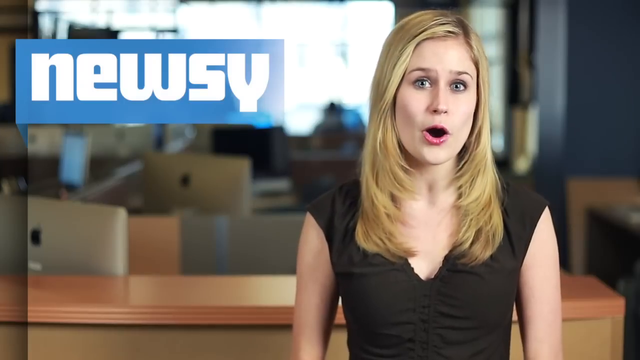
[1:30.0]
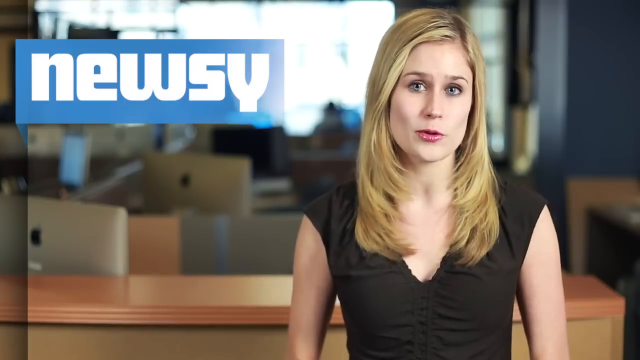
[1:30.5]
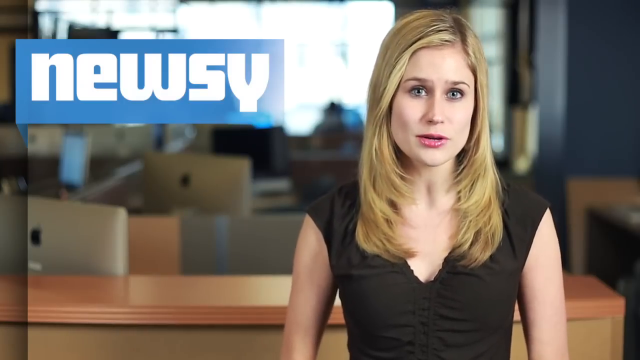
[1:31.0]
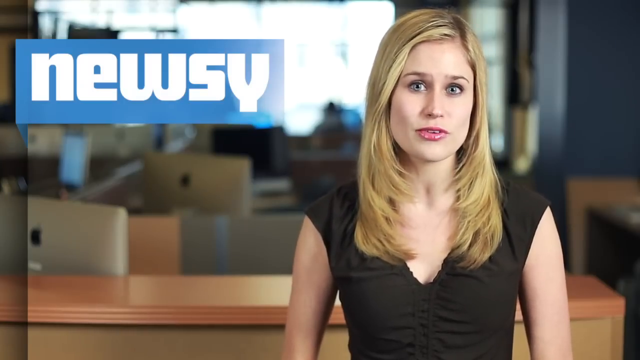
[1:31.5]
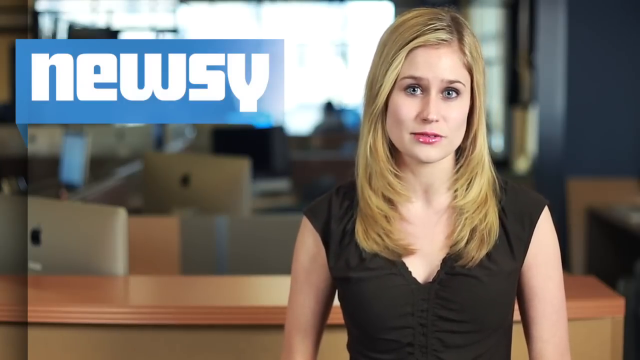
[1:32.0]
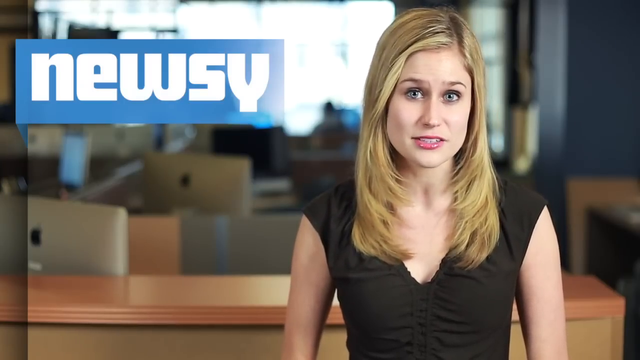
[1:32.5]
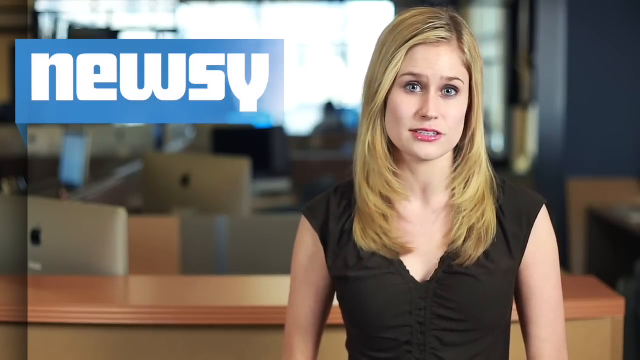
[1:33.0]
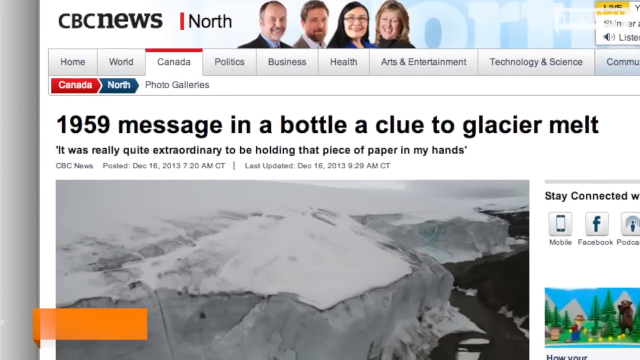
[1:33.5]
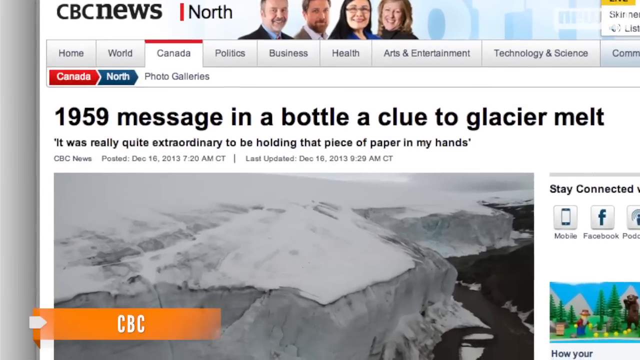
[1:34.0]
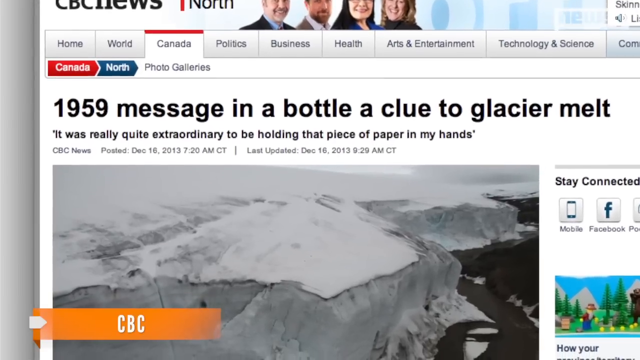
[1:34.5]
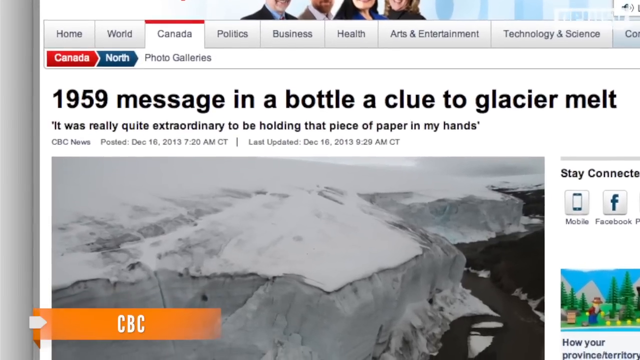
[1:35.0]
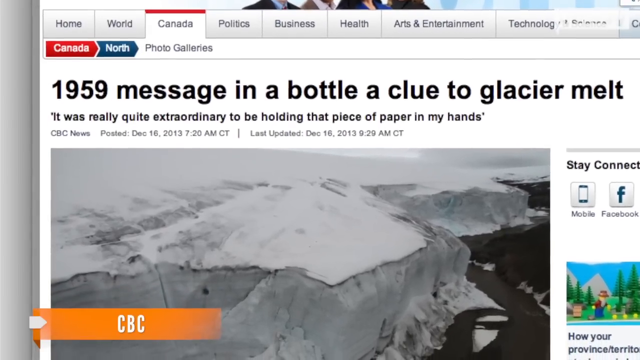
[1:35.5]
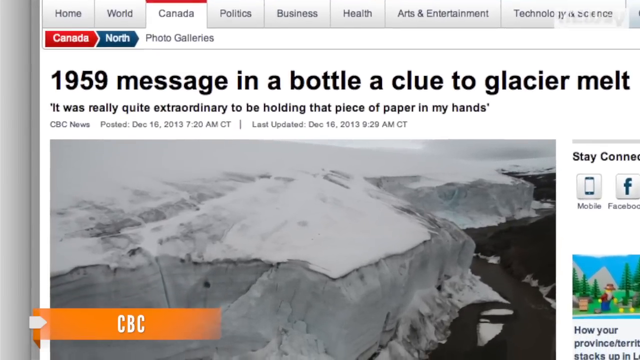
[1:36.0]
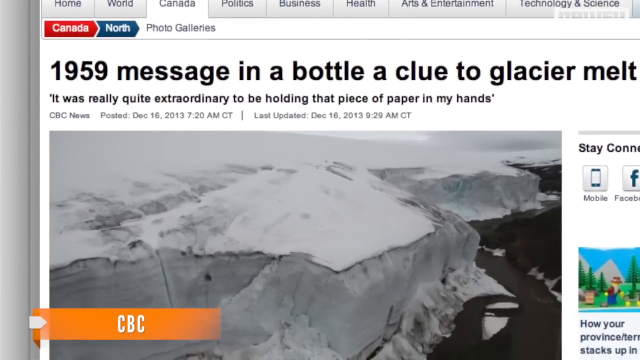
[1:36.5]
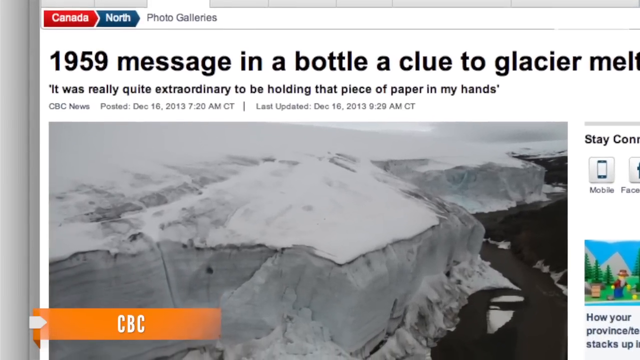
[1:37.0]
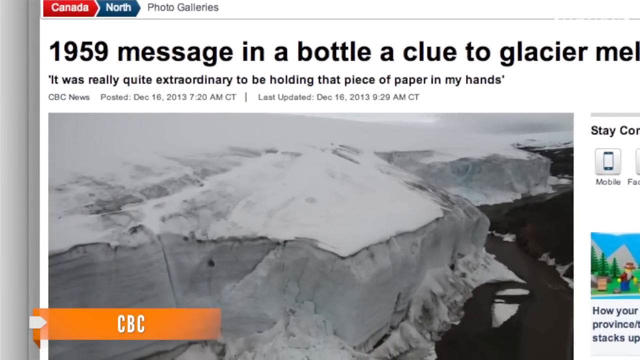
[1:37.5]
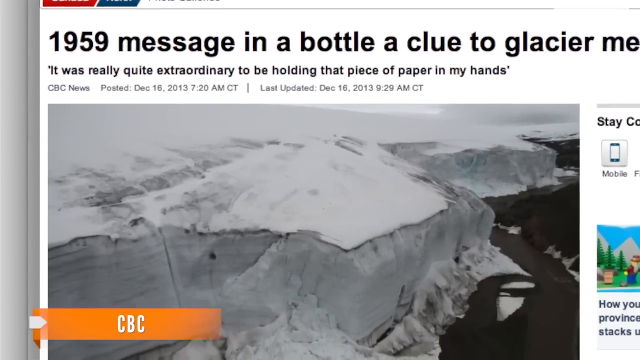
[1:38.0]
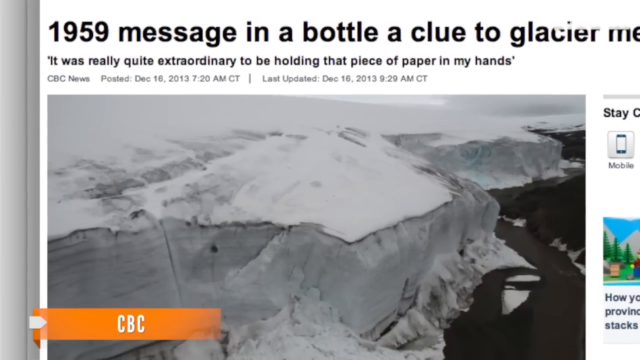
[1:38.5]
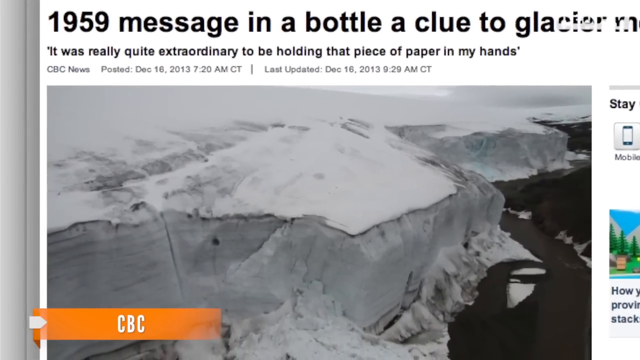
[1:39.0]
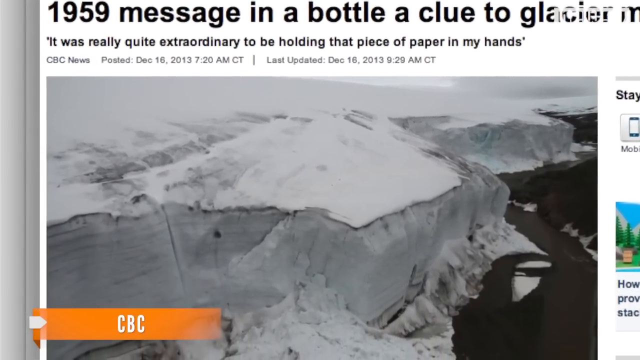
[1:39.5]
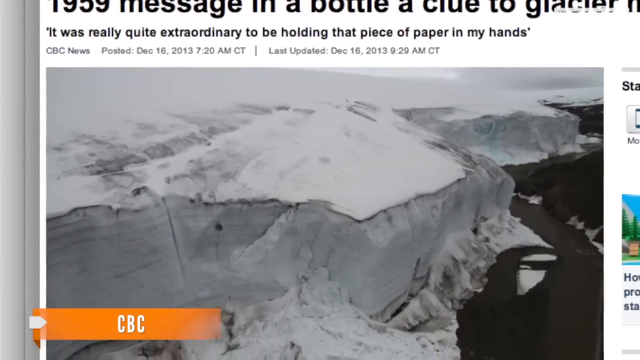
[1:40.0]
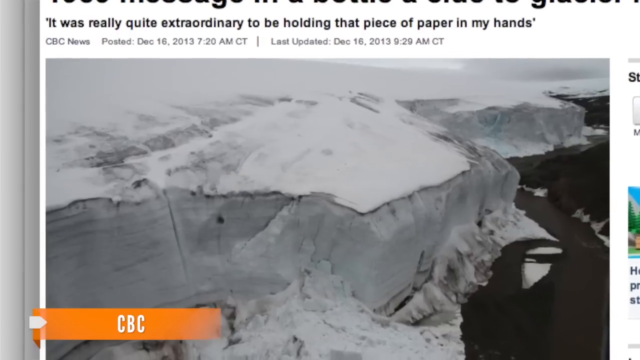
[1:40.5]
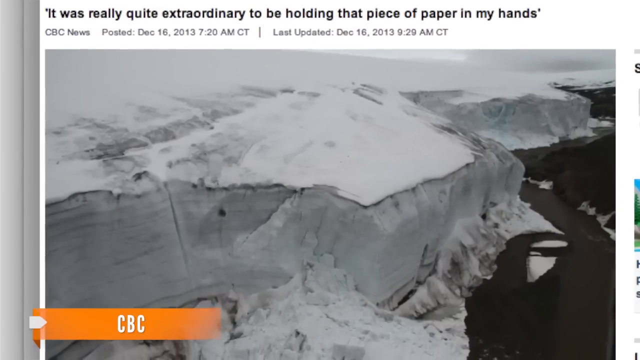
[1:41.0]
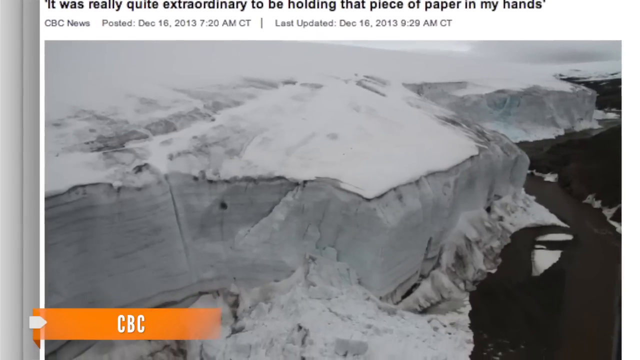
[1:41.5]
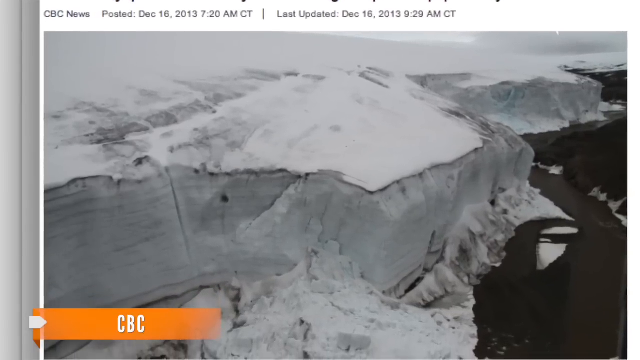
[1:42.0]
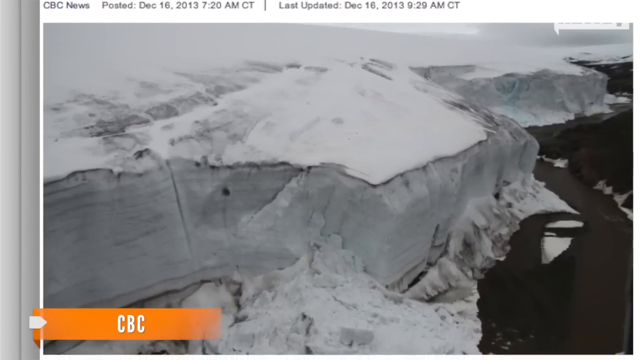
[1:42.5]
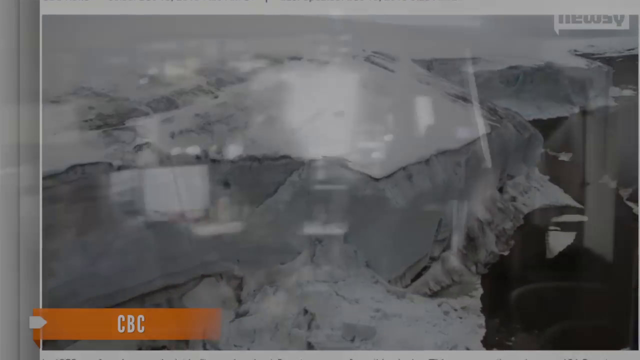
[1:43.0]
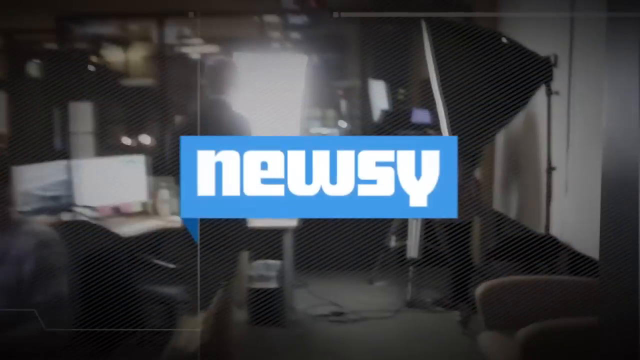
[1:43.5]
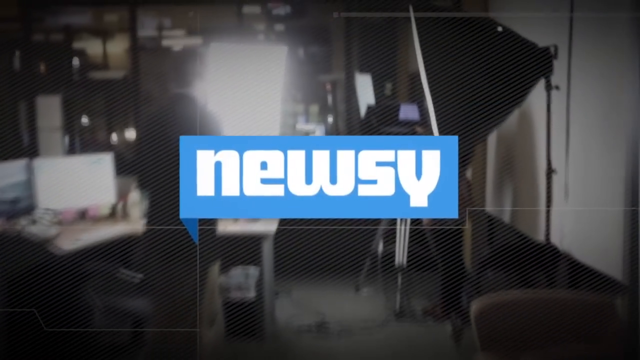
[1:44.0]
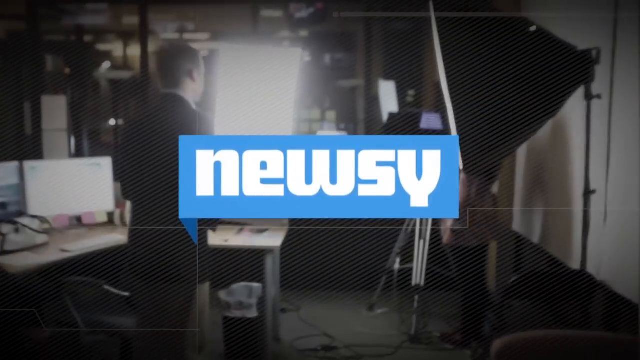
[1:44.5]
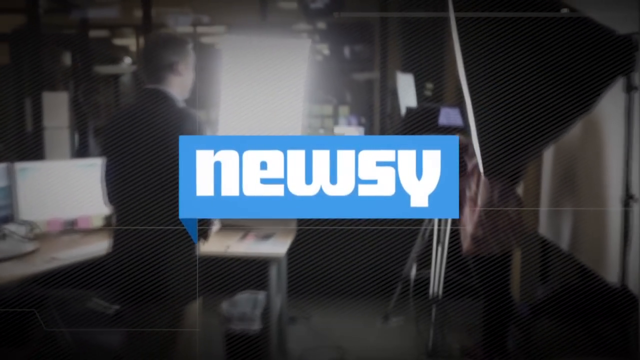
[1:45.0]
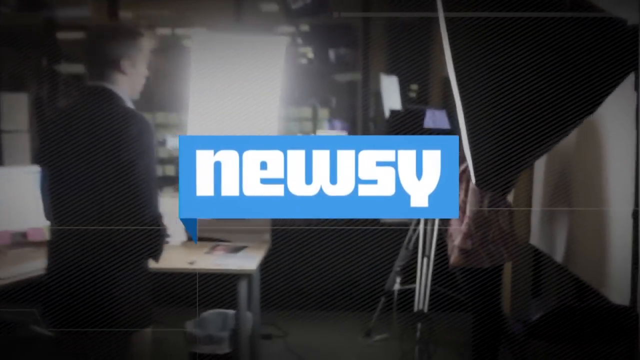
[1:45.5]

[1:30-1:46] The reporter speaks again, jutting her head forward every so often to emphasize points. Another news website appears, CBC News, in its north section, with Canada selected in a tab across the top of the page. The headline reads "1959 message in a bottle, a clue to glacier melt," with "it was really quite extraordinary to be holding that piece of paper in my hands" beneath it, and below that, in smaller font, "CBC News posted December 16th, 2013, 720 AM CT." Underneath is another photo of a glacier, and in the bottom left is a yellow banner reading "CBC" in white font. The camera zooms in on the photo, showing the glacier in more detail. The screen then switches to another walkthrough of the newsroom in black and white.